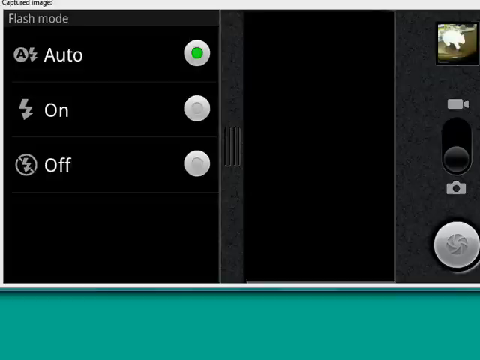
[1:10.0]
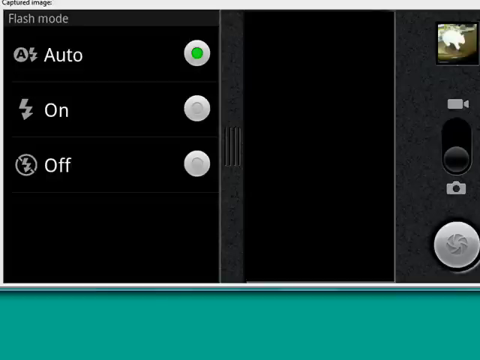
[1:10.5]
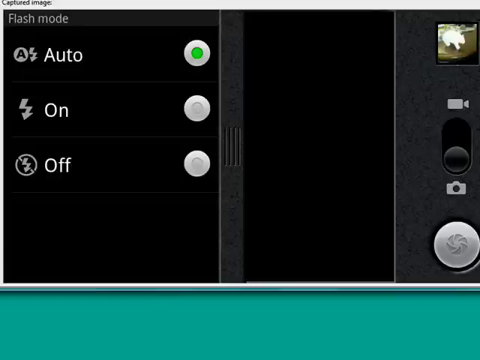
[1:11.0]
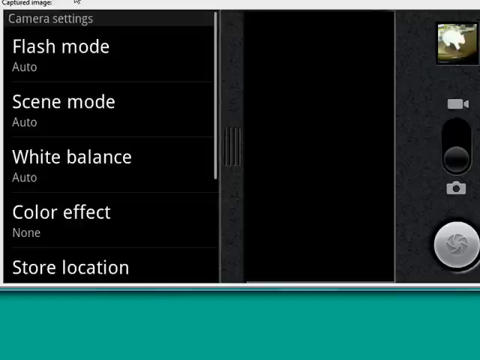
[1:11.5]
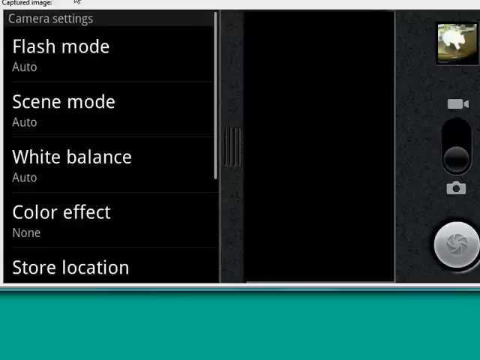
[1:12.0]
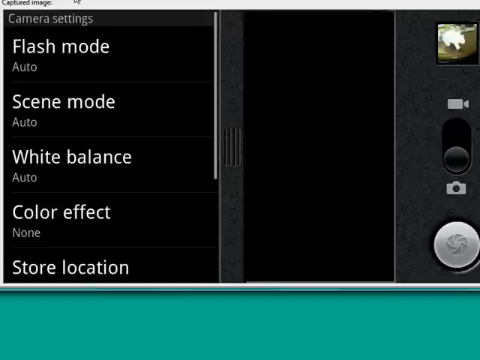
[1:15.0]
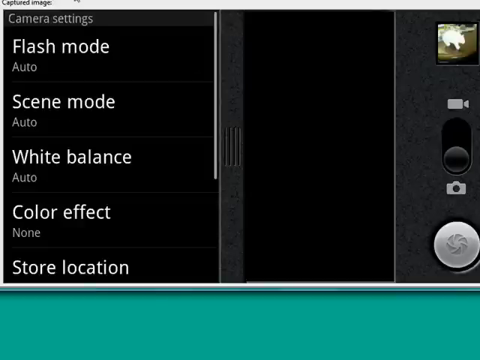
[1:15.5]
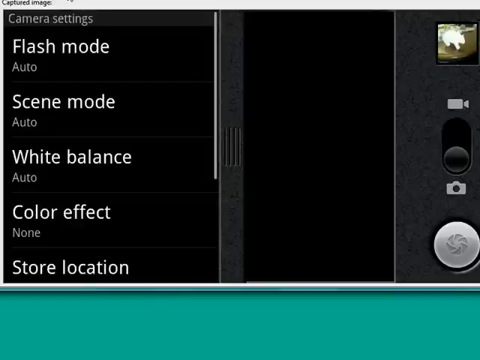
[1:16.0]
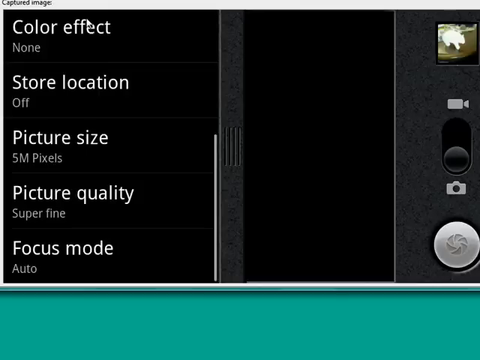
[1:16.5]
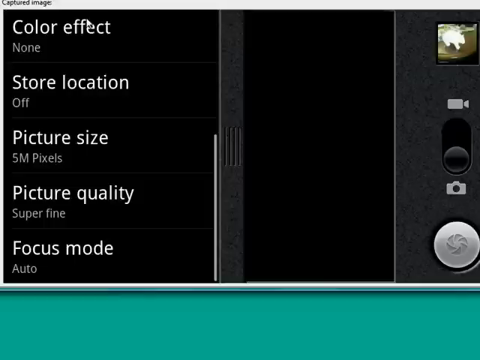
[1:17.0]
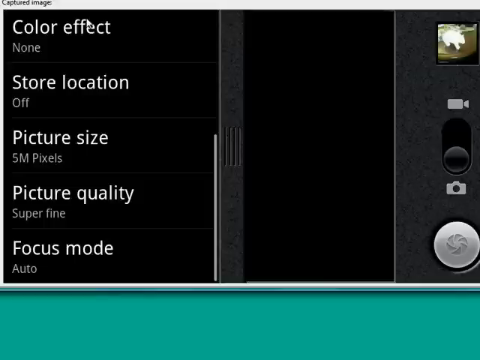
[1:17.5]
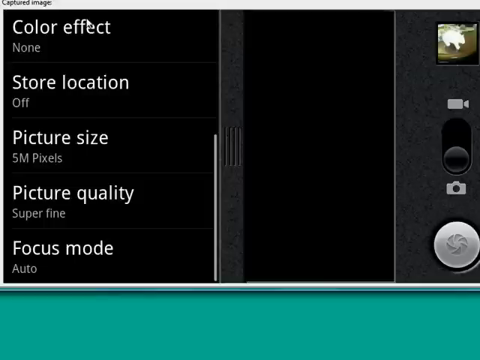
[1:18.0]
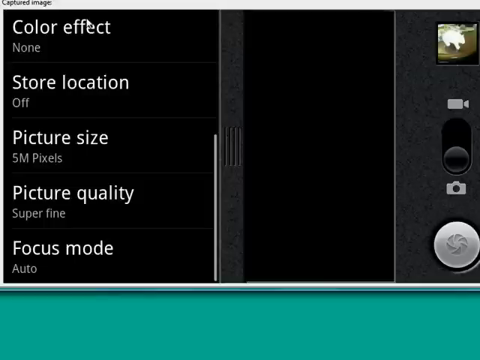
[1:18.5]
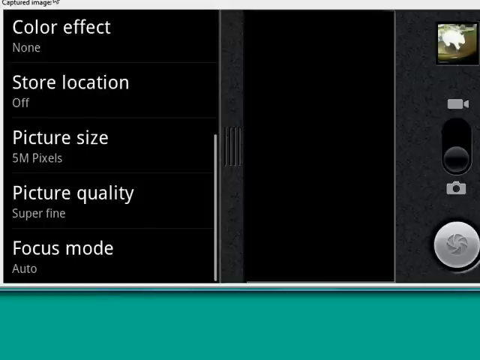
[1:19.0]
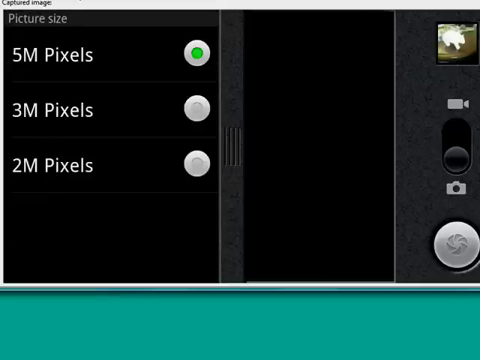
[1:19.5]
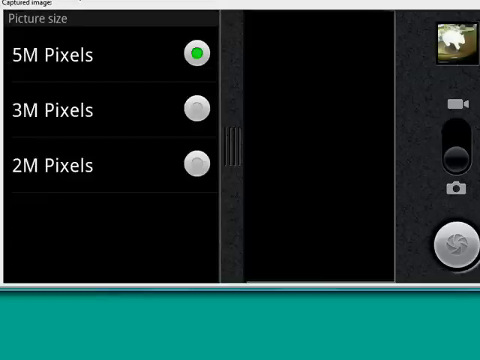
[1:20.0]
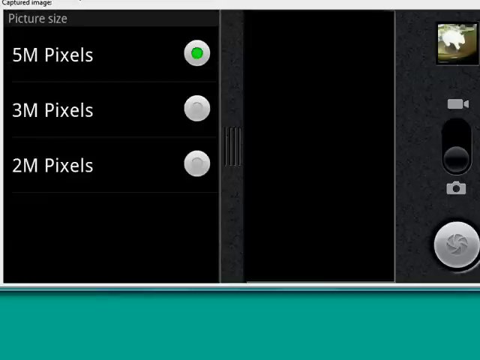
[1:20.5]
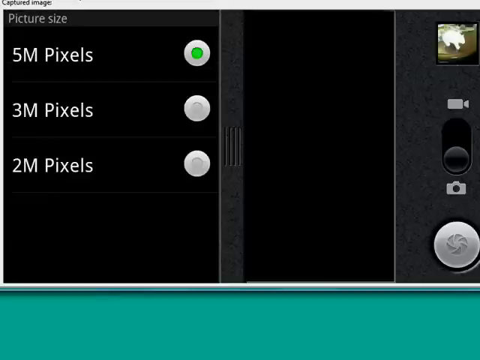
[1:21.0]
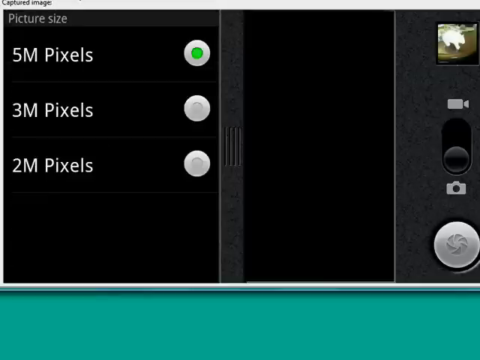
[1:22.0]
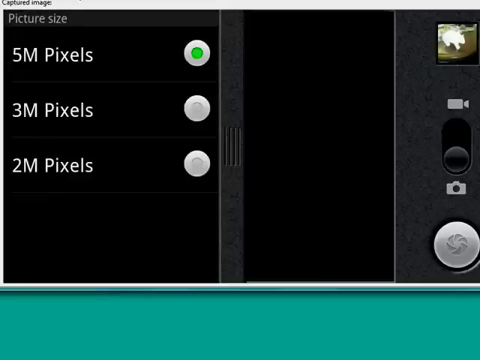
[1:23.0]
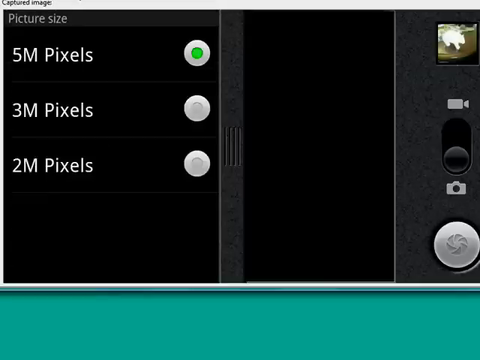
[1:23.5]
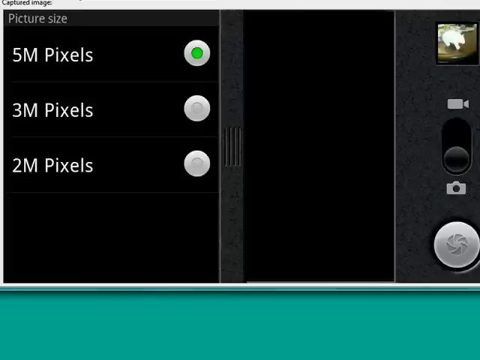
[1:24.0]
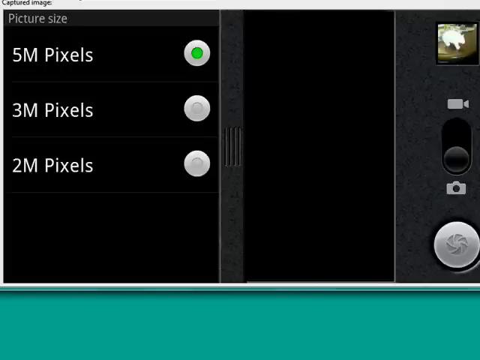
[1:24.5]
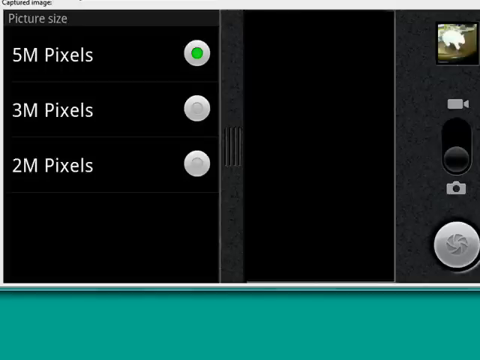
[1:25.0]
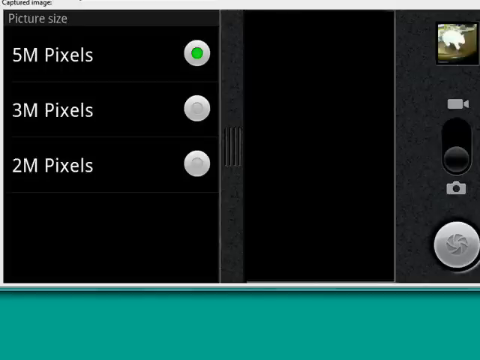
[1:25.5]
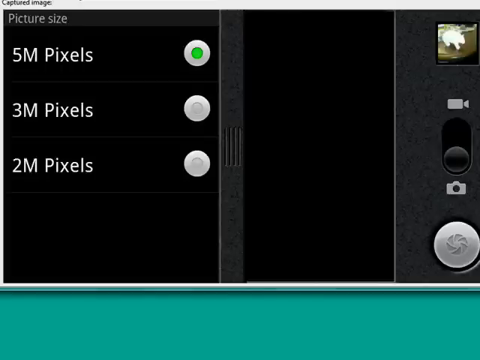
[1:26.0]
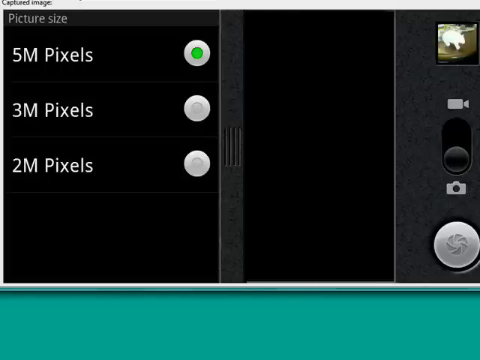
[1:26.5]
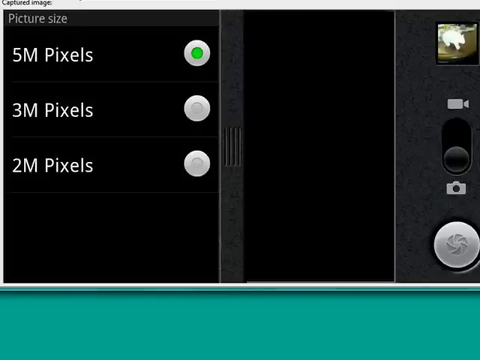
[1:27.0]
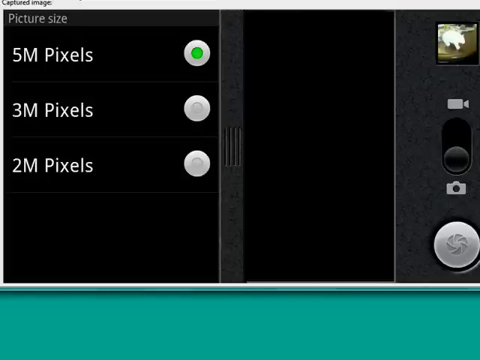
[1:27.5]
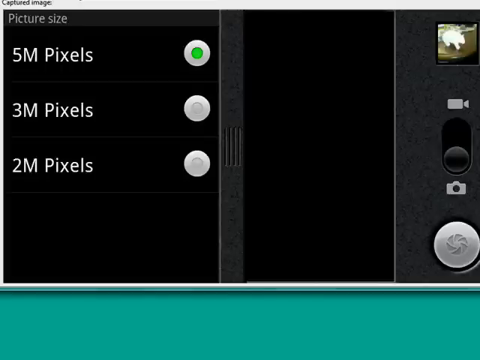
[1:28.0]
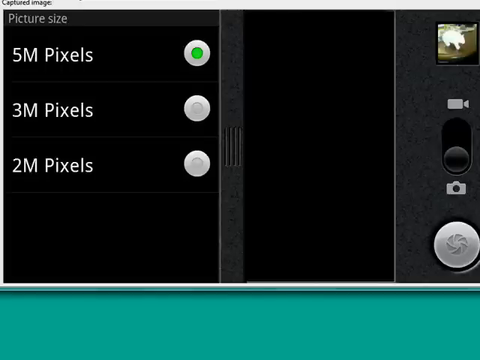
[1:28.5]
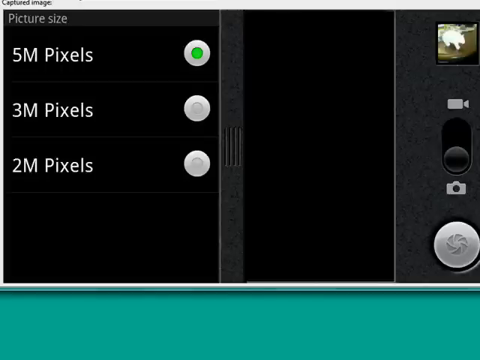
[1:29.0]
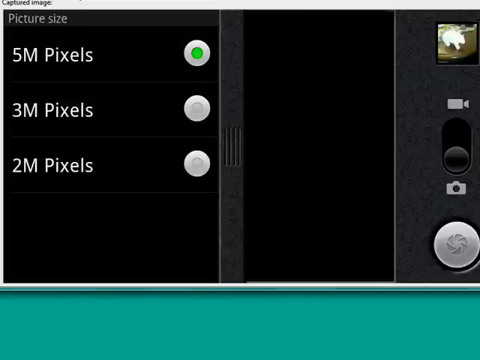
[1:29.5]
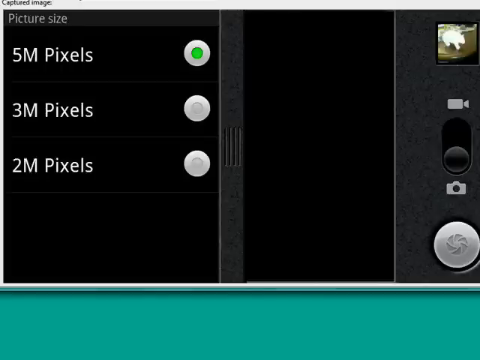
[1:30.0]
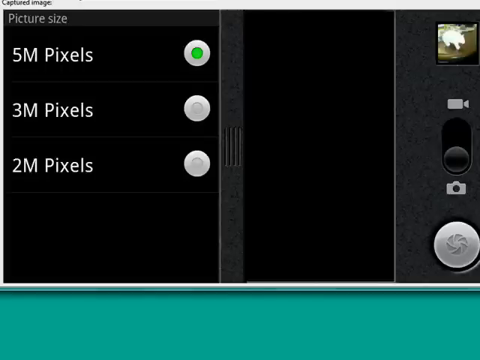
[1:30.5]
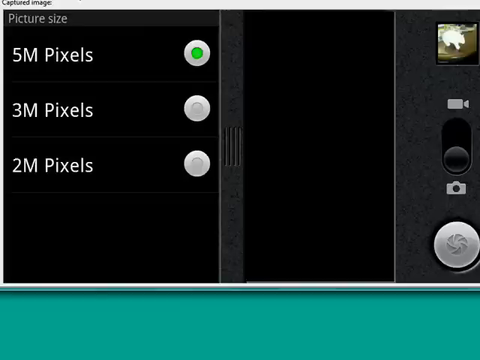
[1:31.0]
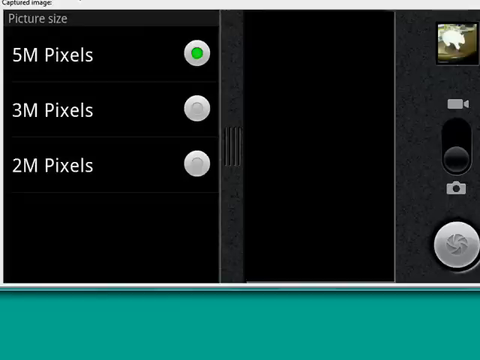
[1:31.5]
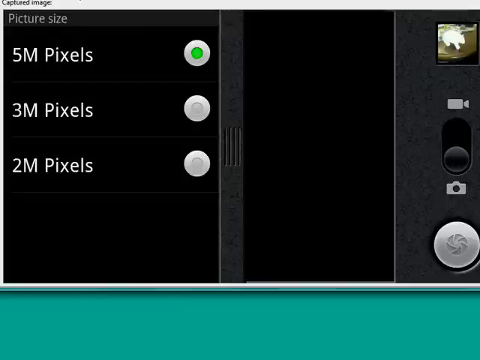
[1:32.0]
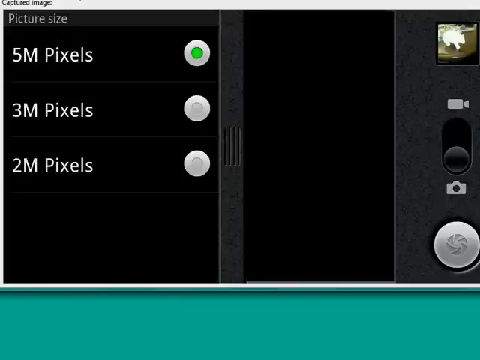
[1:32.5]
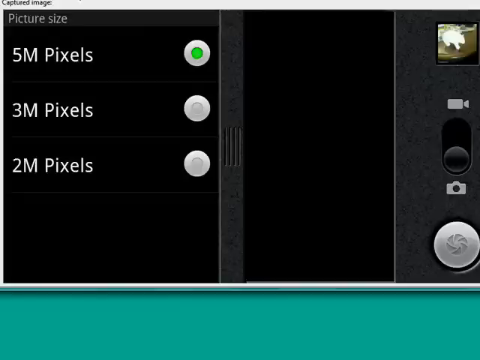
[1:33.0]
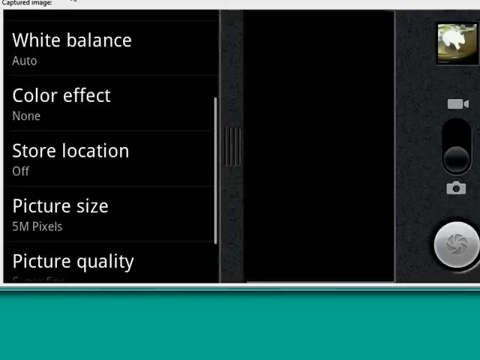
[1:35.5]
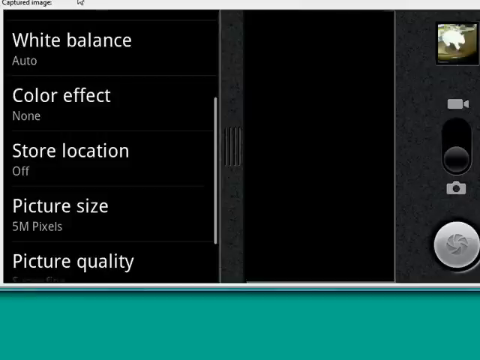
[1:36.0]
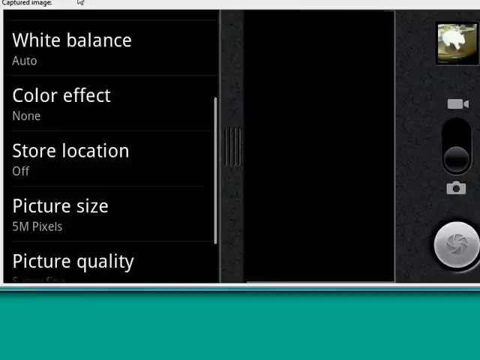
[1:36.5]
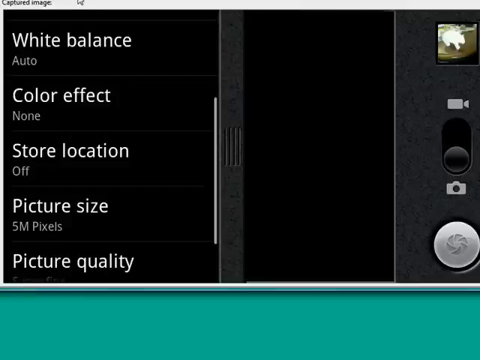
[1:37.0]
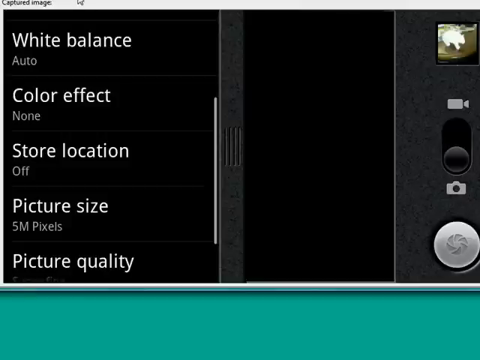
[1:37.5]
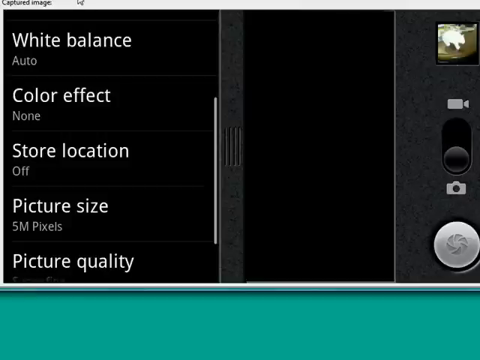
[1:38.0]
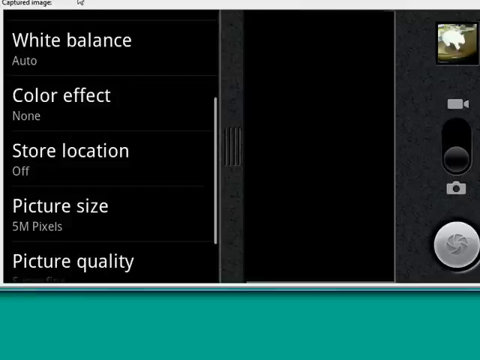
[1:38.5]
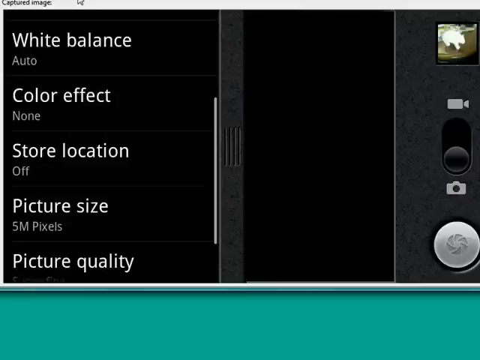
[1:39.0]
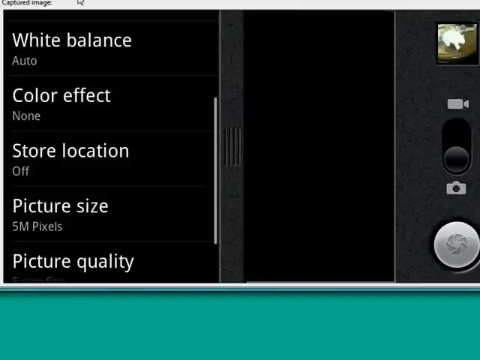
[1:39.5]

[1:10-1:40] The camera application's user interface has its right side border taken up by a picture preview at the top right, showing a white cat on a brown background, a toggle switch between camera and recorder in the middle, and a shutter icon at the bottom right. The left side holds the camera settings, each setting in white font with its option underneath in gray font, on a black background. The picture size option is selected and further available picture sizes appear: "5M pixels" at the top, currently selected with a green dot in its radio selector; "3M pixels" underneath with a white empty radio selector on the right side; and third, "2M pixels," also with an empty radio button beside it. The main options are then brought back onto the screen, scrolled down toward the bottom of the list, showing white balance, color effect, store location, picture size, and picture quality.